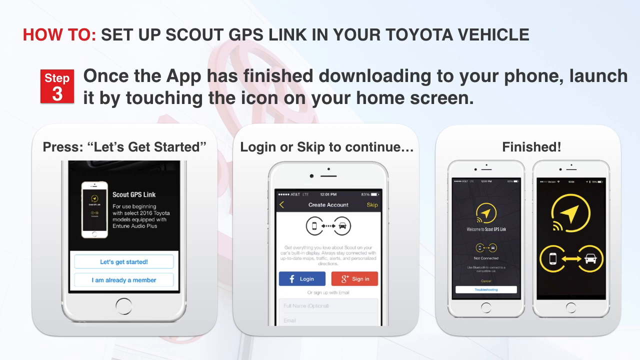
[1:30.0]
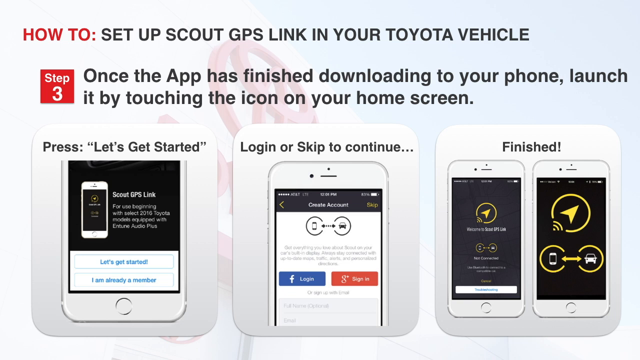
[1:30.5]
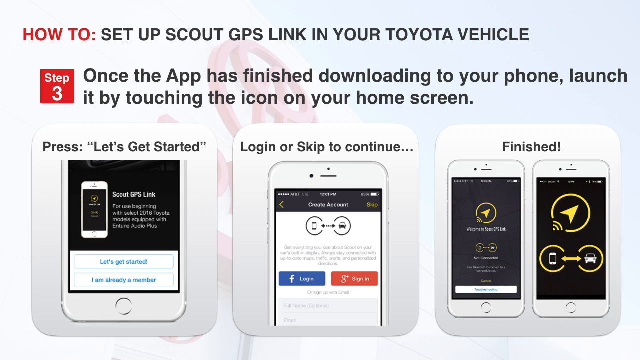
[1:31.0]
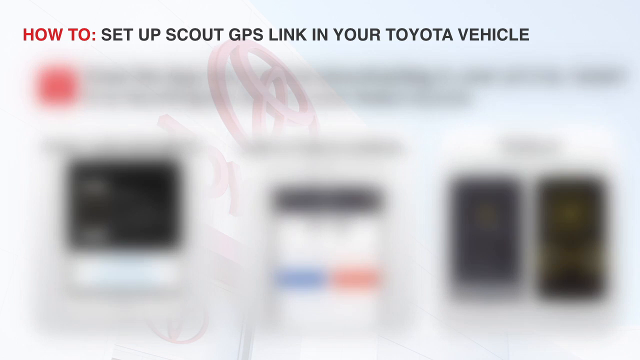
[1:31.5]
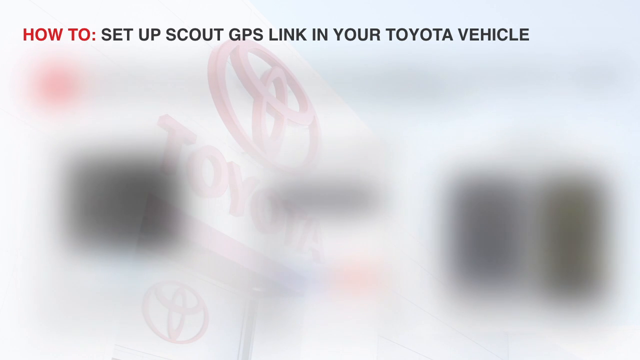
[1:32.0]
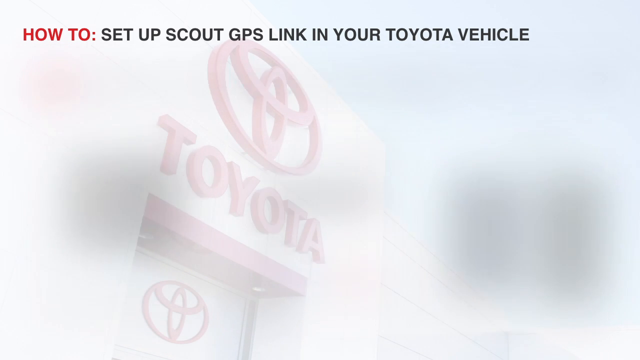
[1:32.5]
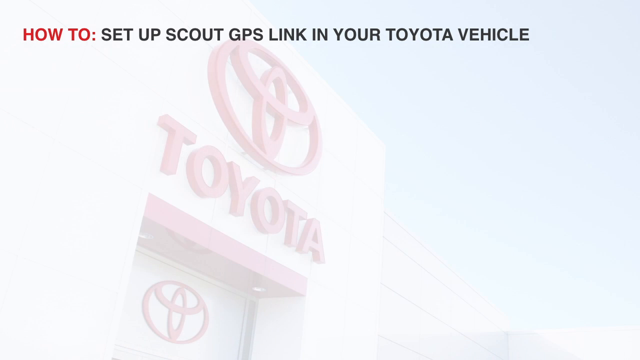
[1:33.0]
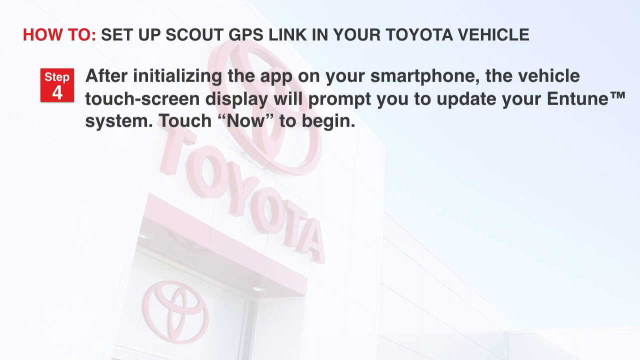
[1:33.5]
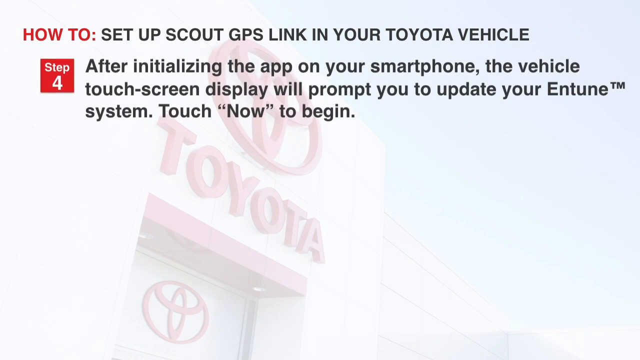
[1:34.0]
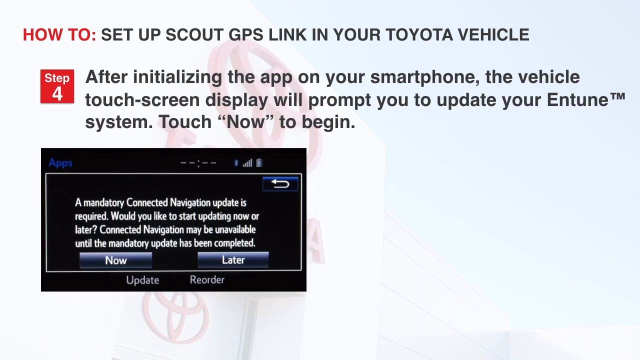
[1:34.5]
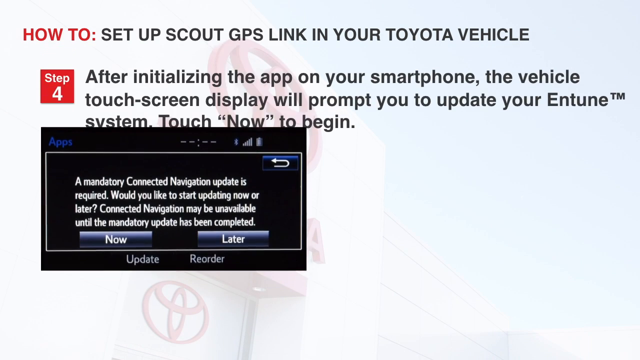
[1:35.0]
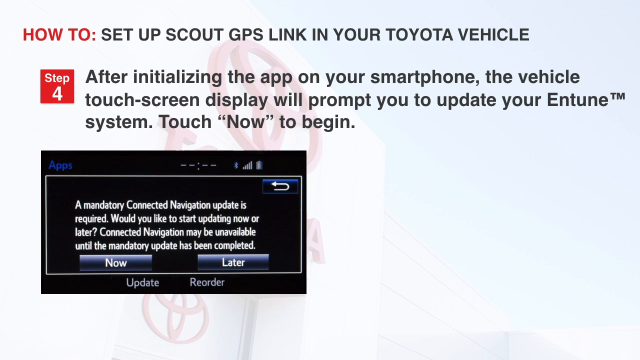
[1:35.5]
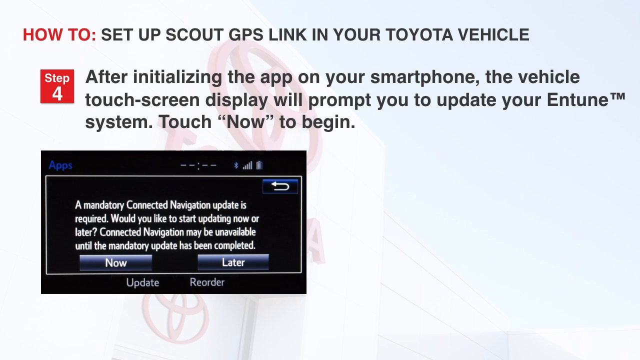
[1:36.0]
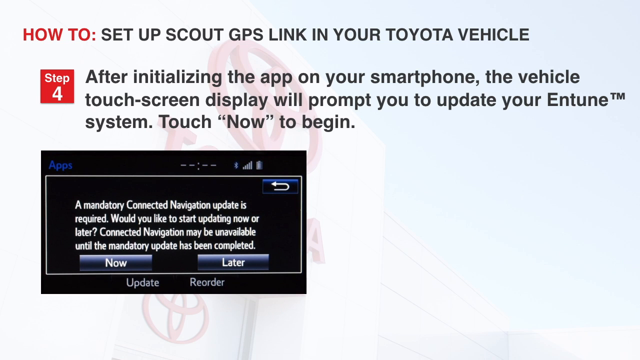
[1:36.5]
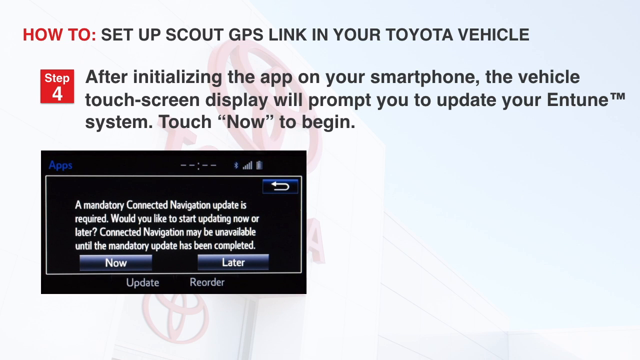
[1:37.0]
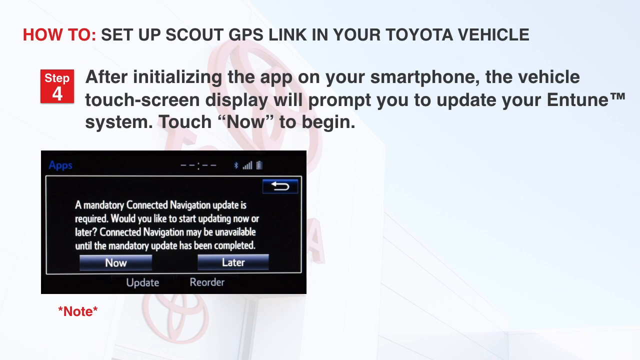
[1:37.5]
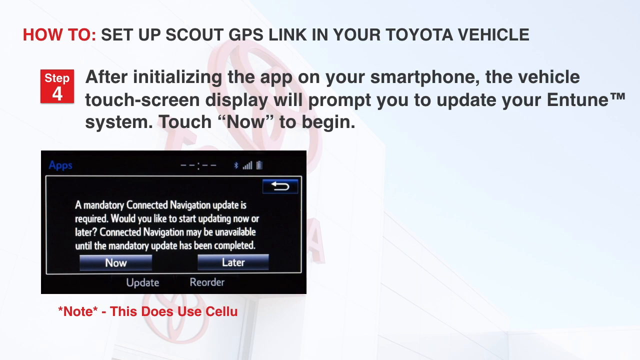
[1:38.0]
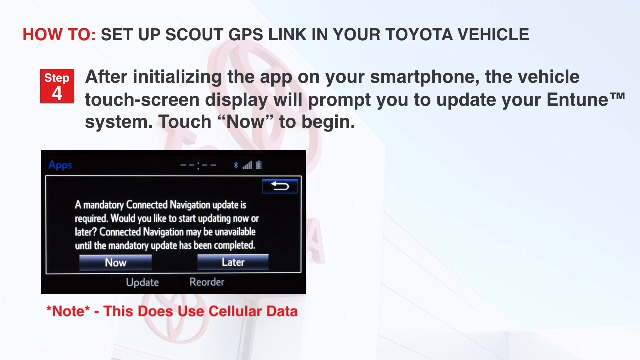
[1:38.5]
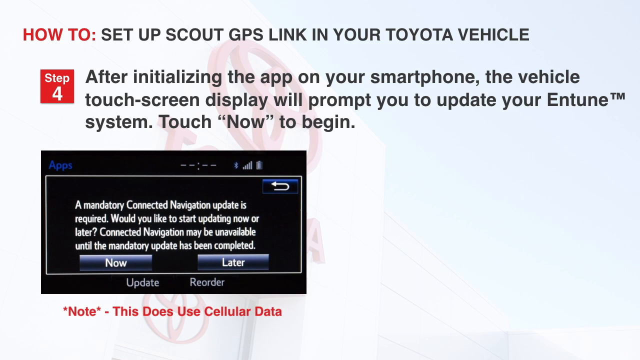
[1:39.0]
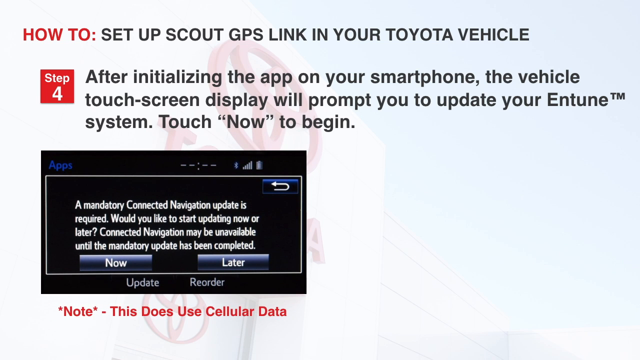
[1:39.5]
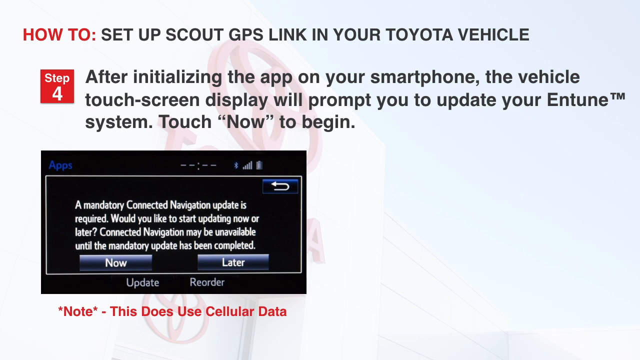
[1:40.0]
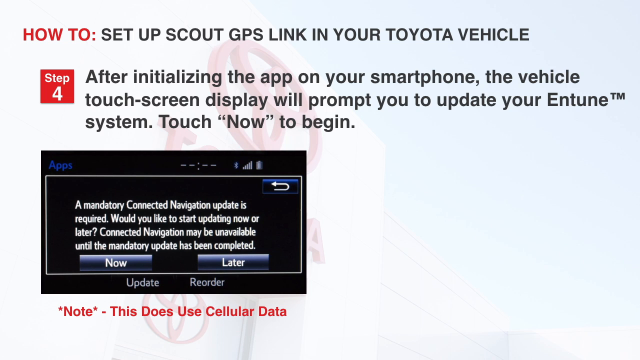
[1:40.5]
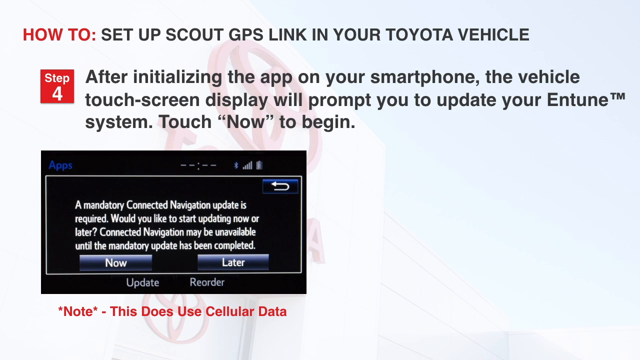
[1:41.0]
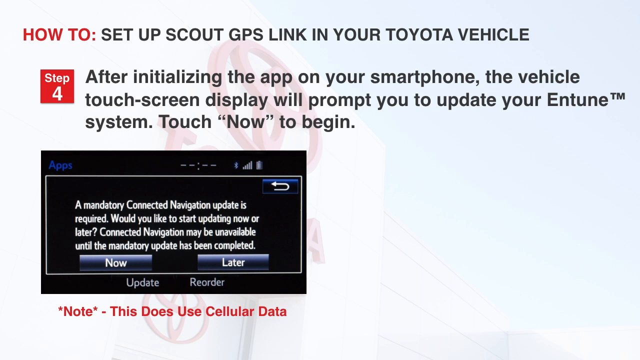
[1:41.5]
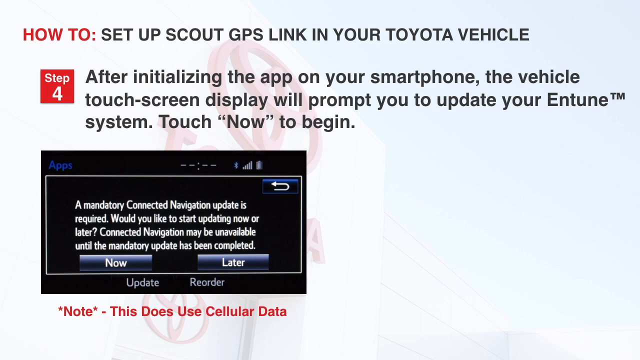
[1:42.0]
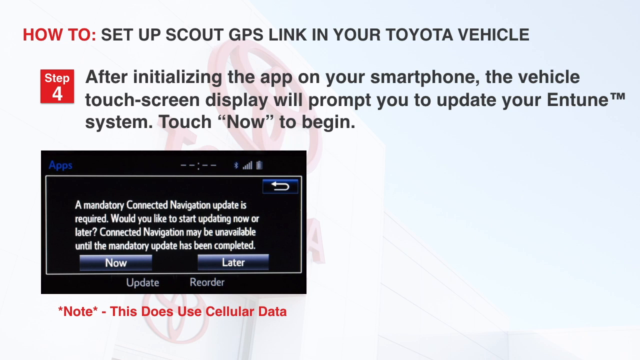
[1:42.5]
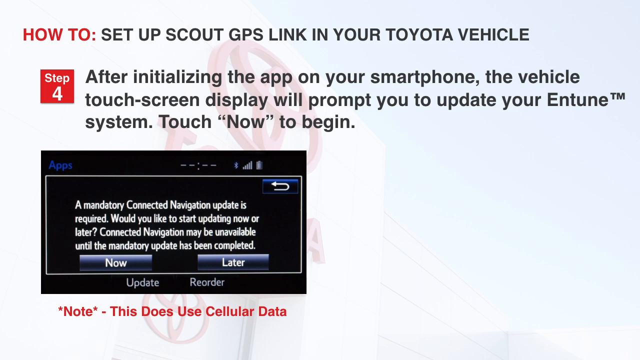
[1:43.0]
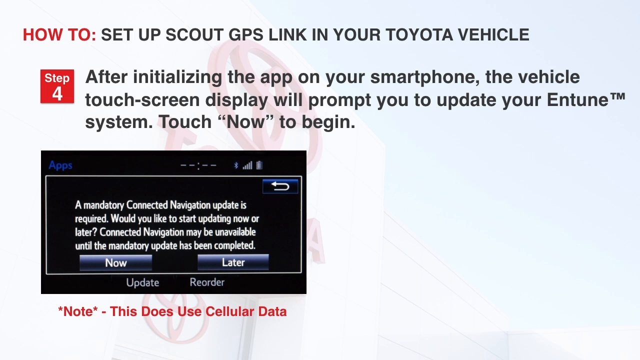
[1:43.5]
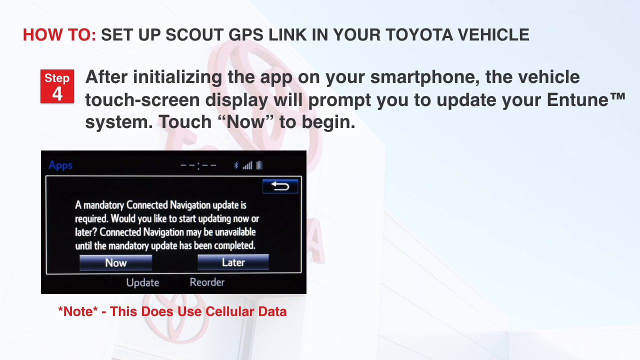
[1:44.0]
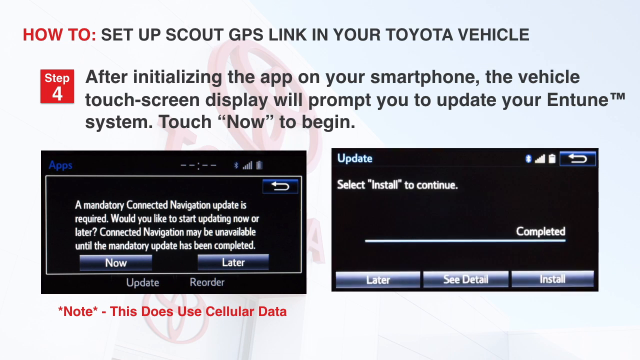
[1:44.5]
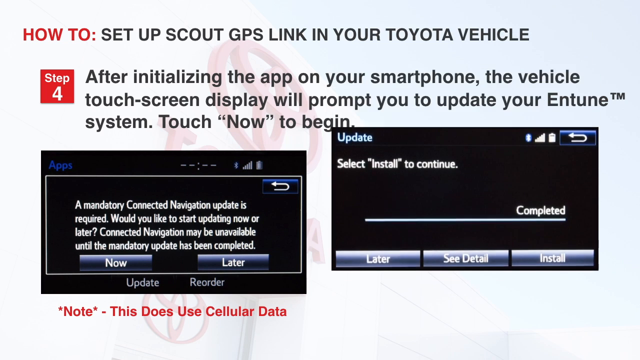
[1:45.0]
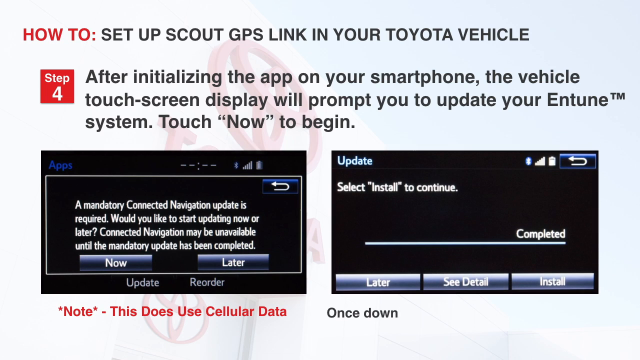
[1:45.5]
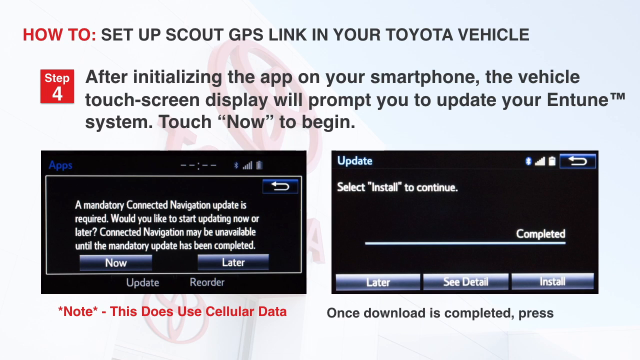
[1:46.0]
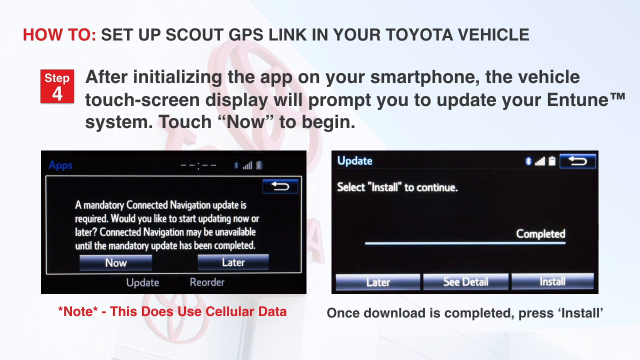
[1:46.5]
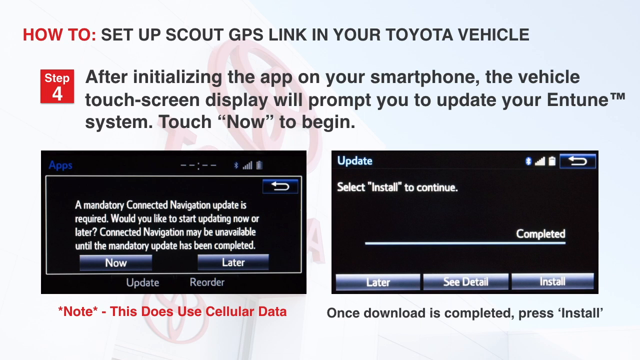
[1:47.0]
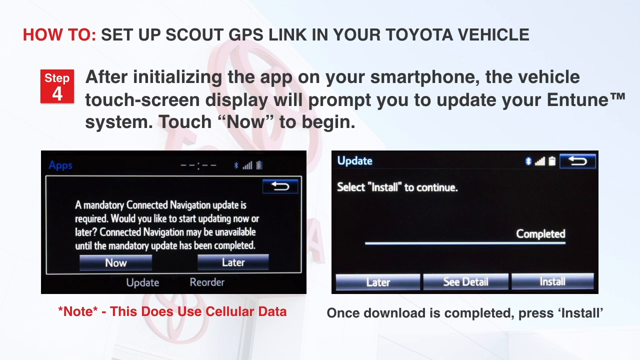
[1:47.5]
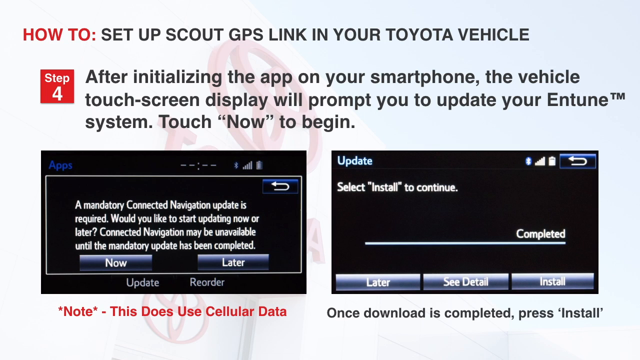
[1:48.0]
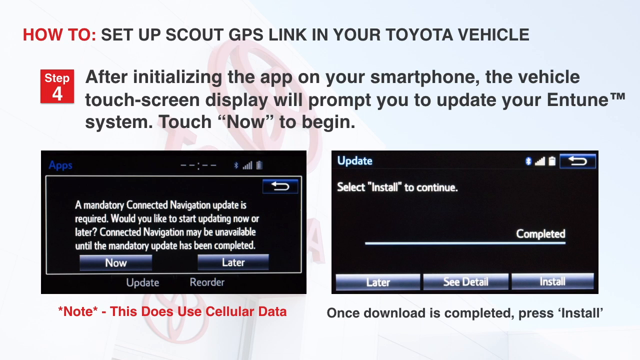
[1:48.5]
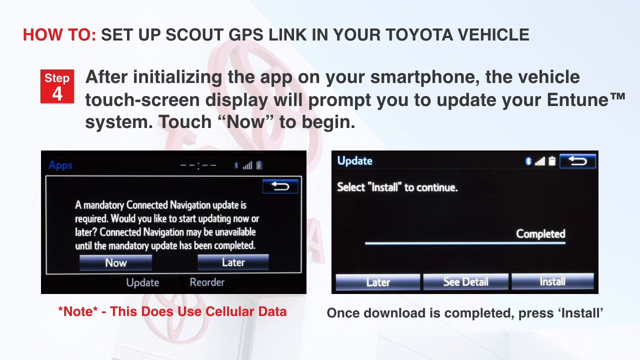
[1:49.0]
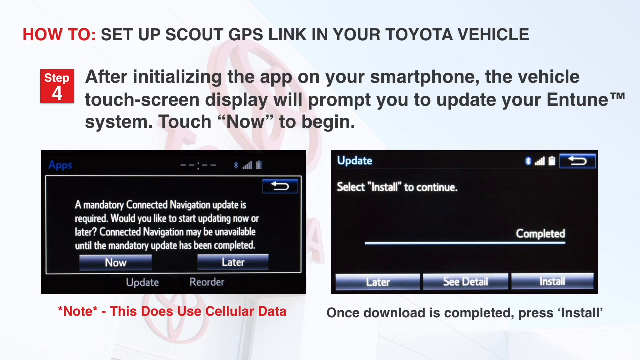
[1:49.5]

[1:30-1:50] Step three stays on screen for a bit, then the presentation transitions to step four. The text at the top reads "after initializing the app on your smartphone, the vehicle touch screen display will prompt you to update your Entune system. Touch it now to begin." At the bottom left, a screenshot shows two buttons, "now" and "later," with "update" and "reorder" below them. The text at the top right, above "now" and "later," reads "a mandatory connected navigation update is required. Would you like to start updating now or later connected navigation may be unavailable until the mandatory update has been completed." Right below that screenshot it says "note this does use cellular data." Another screenshot says "select install to continue the process."